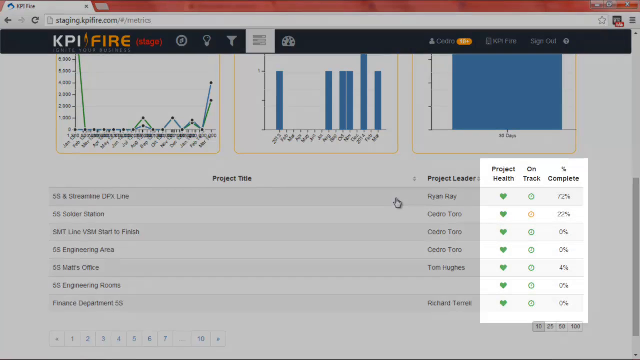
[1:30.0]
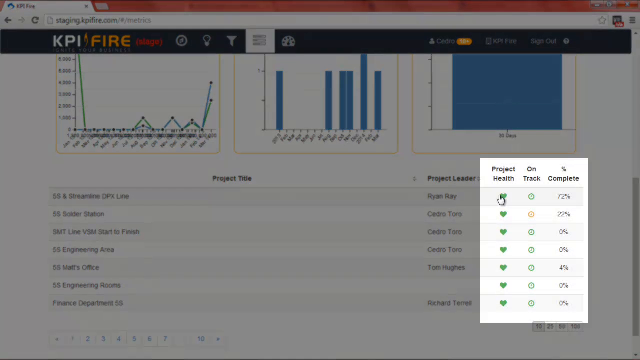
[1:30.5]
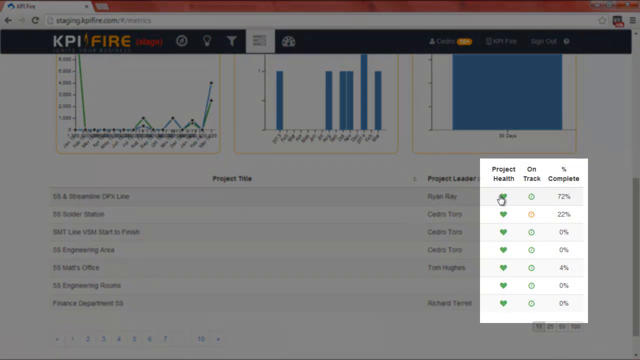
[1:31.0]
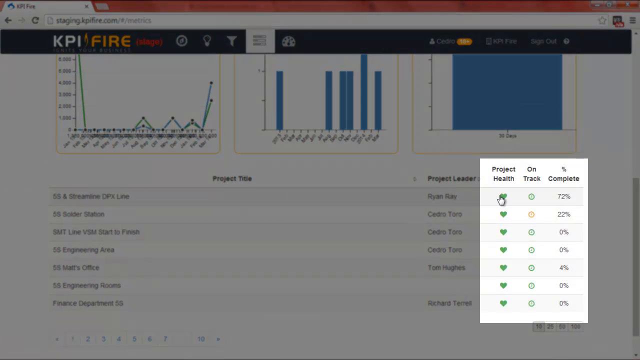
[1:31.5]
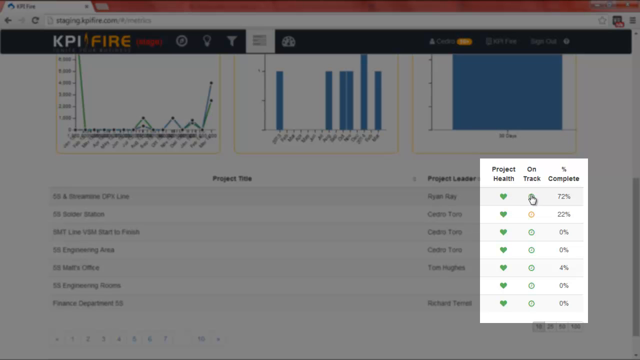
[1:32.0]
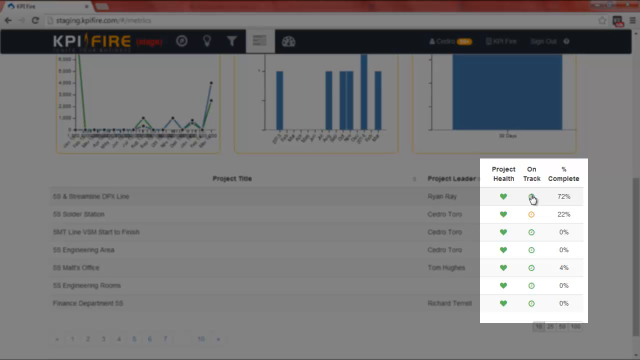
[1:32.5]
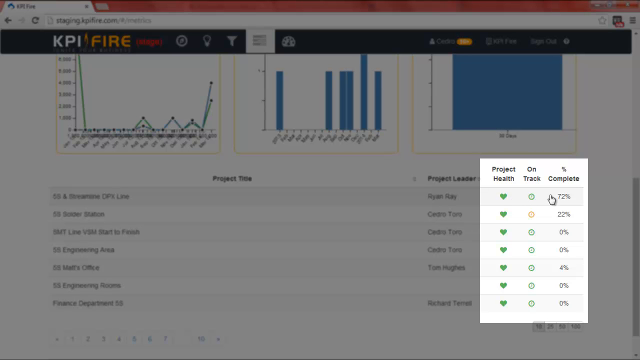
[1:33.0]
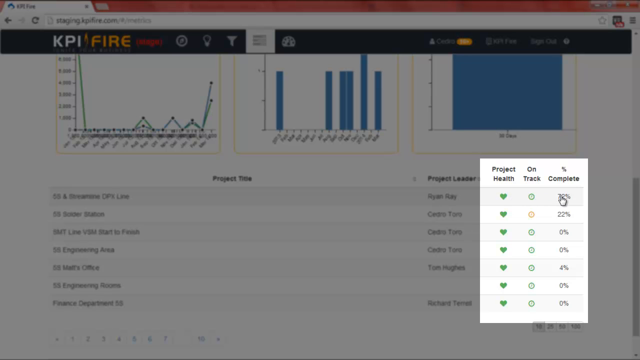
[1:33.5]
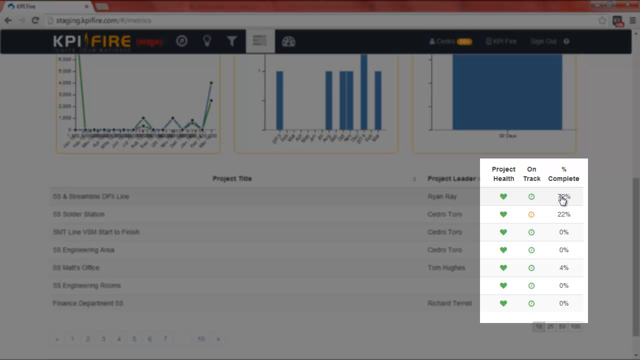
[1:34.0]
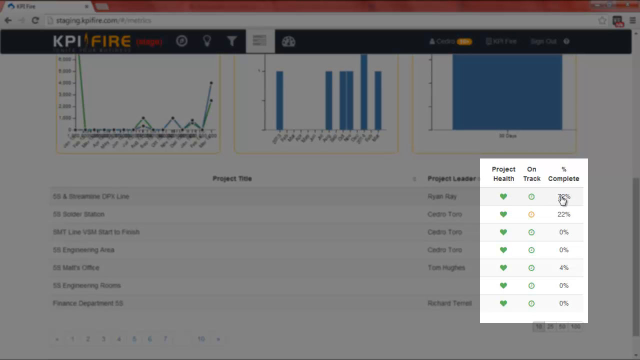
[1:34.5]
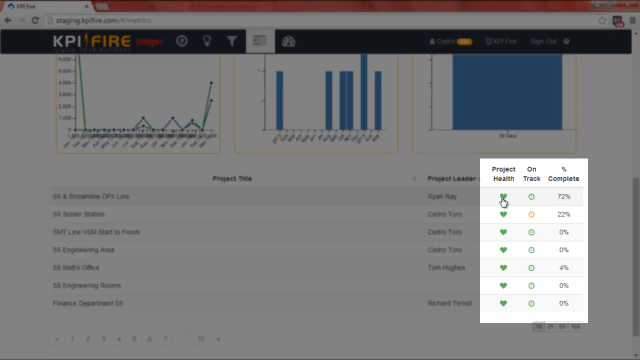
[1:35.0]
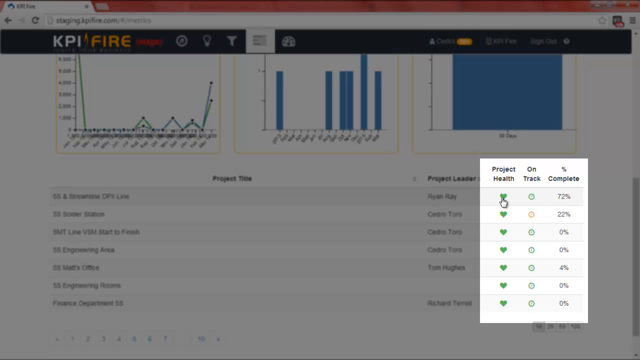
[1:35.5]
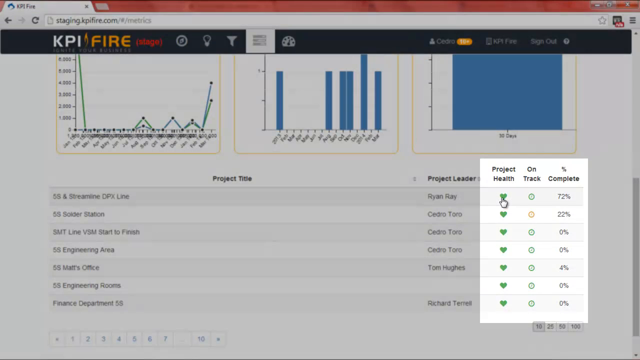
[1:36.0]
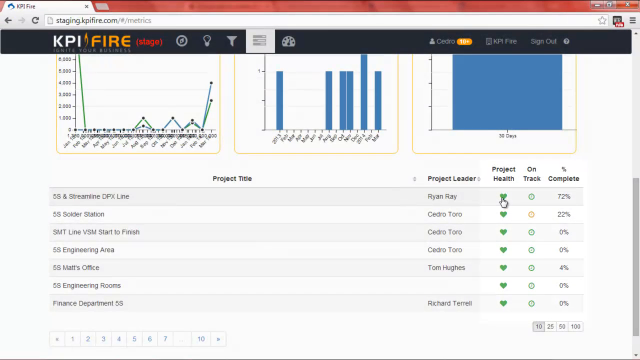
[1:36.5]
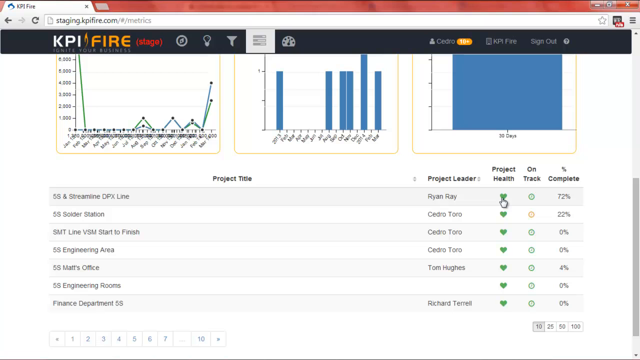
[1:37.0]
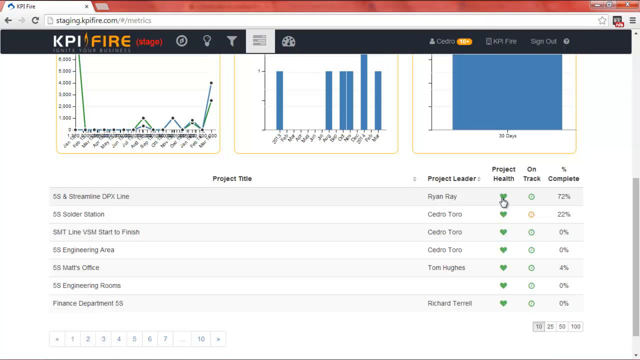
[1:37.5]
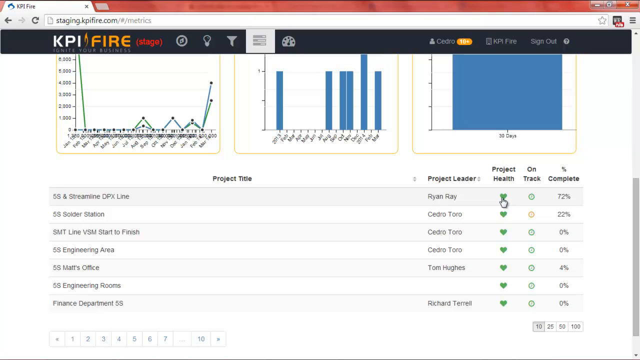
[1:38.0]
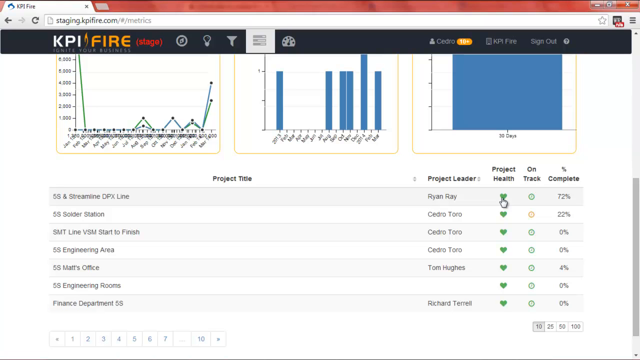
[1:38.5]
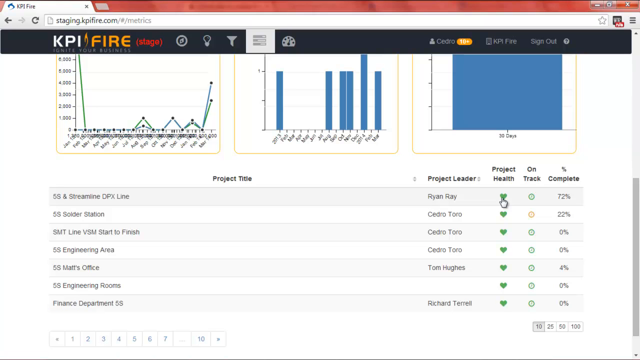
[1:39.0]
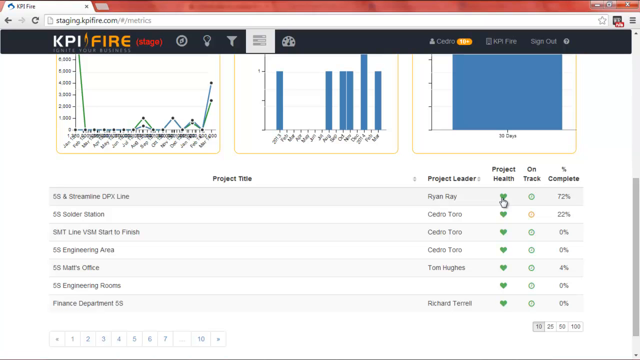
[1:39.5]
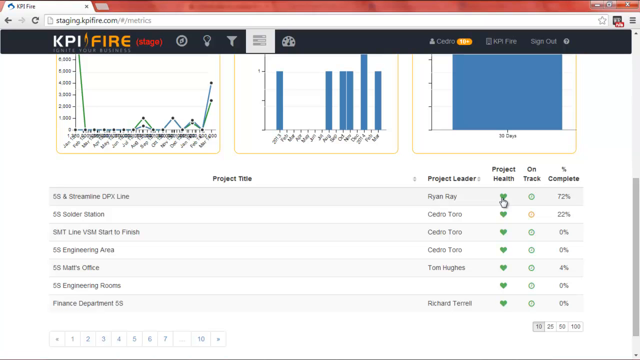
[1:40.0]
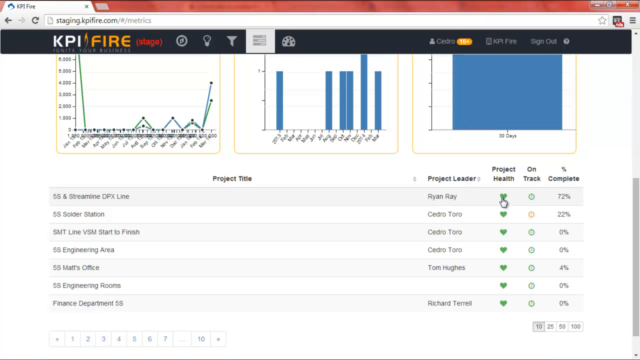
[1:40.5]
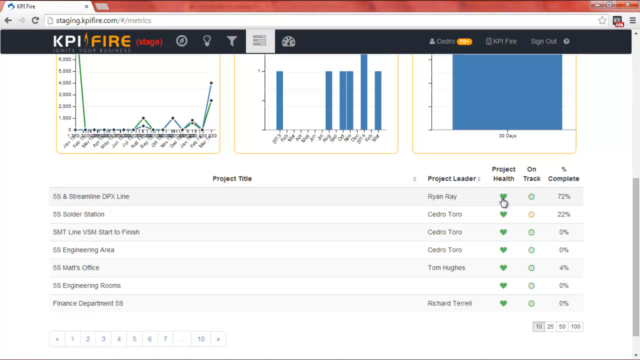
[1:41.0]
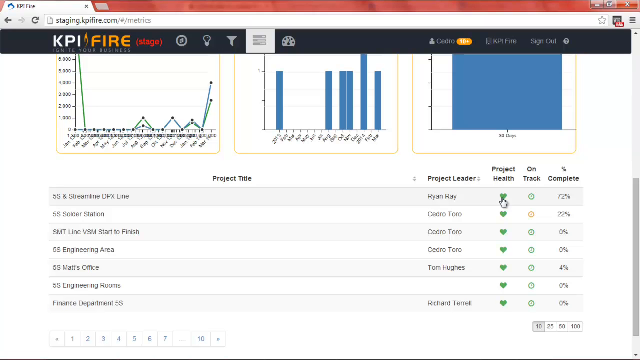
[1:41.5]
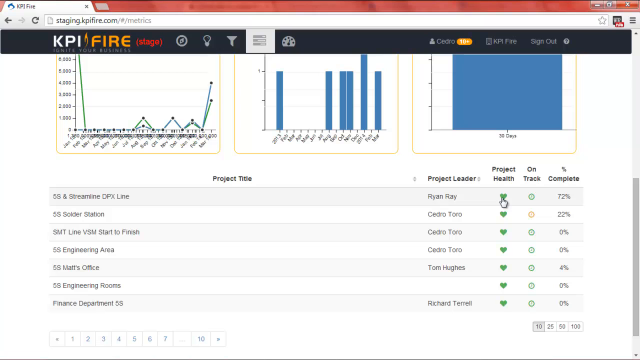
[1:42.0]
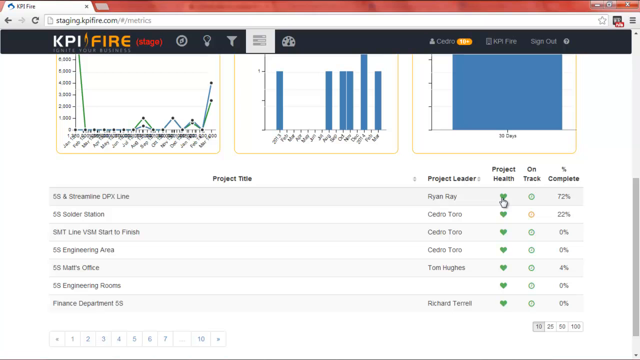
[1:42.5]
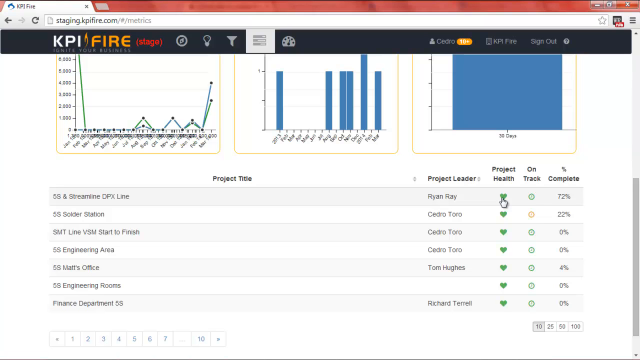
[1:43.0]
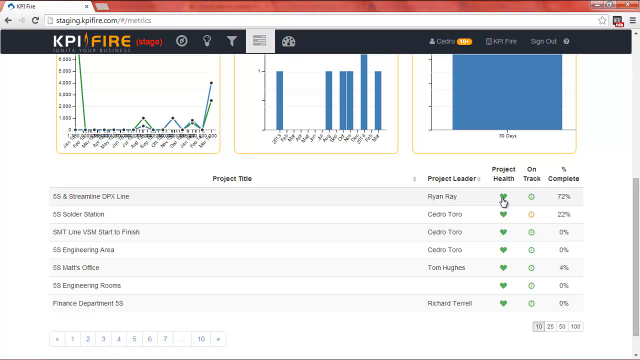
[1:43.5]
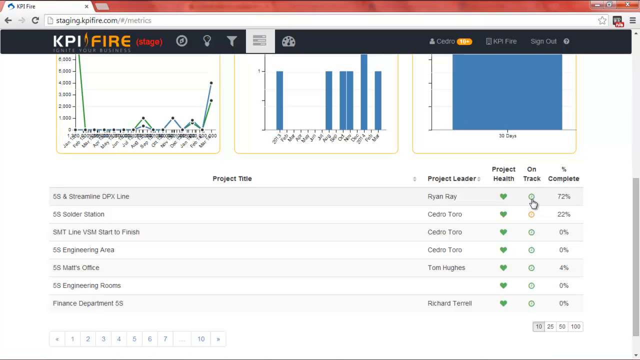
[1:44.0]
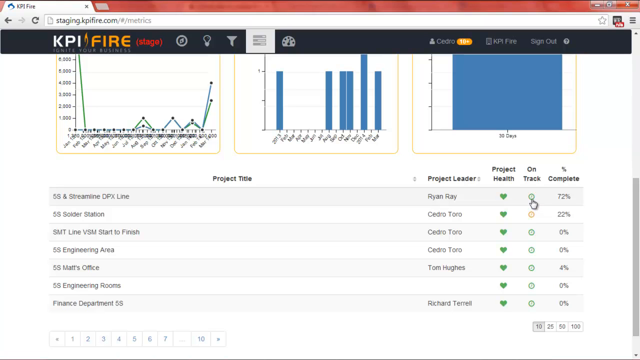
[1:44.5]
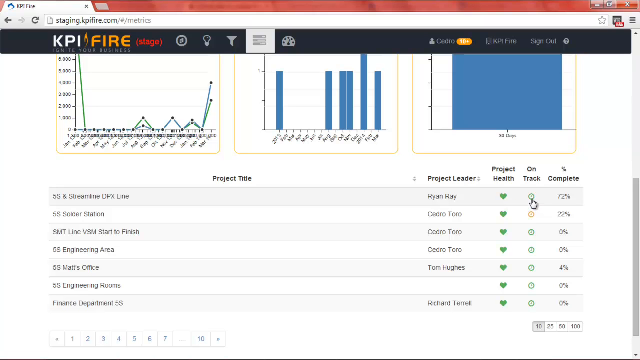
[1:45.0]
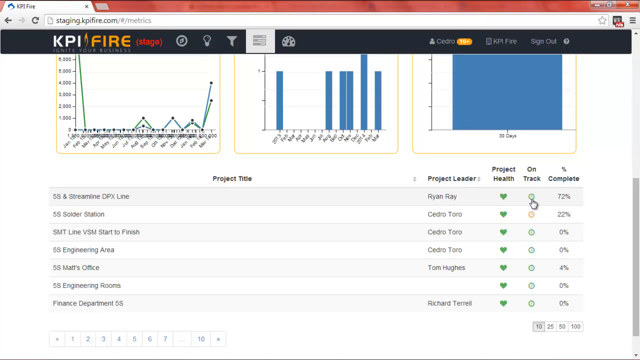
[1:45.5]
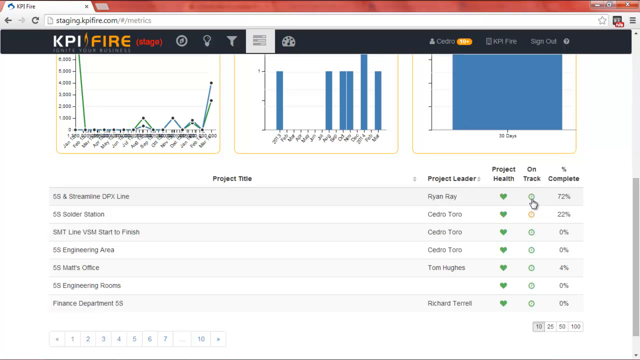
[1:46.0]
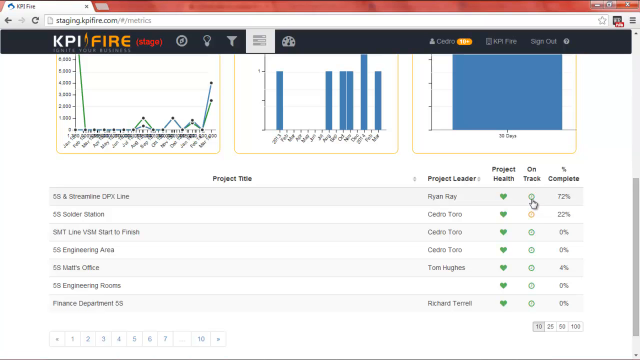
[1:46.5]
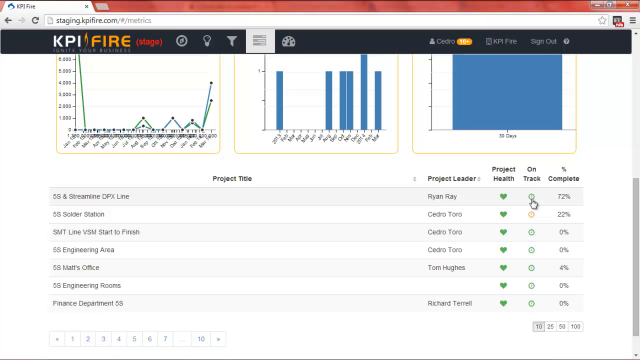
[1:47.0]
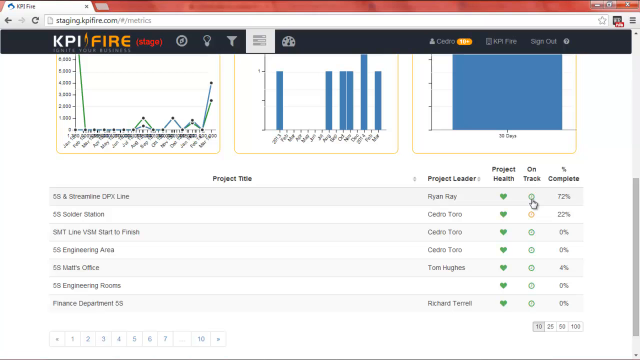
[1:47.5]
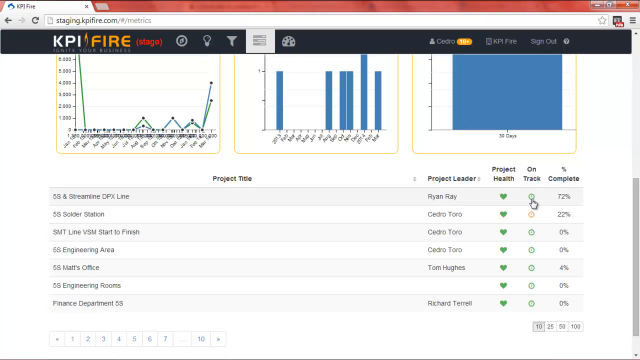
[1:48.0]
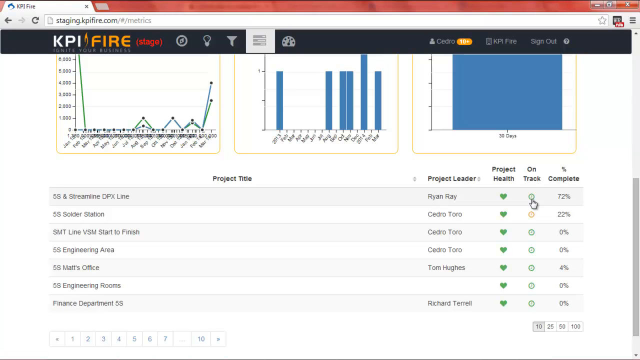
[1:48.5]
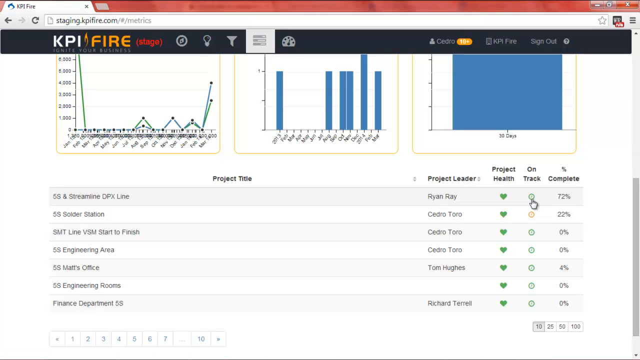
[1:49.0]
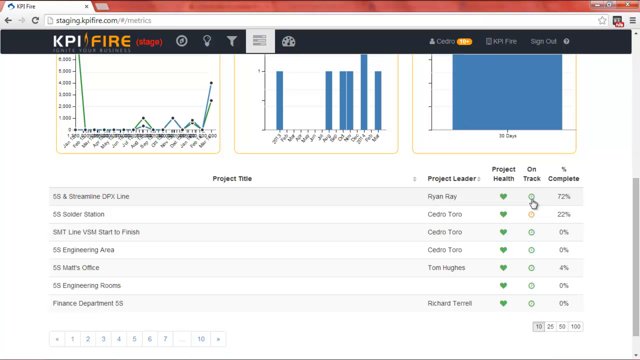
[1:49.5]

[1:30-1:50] The screen fades to a low-opacity black over the whole web page, except for a square that remains clearly colored over the Project Health, On Track, and Percentage Complete sections. The mouse hovers over the sections from Project Health to On Track to Percent Complete, then moves back to Project Health and stays on a green heart symbolizing the project's good health. It then moves to the On Track symbol, a simple clock symbol that is green, indicating the project is on track. Each project has a differently colored symbol for its health or progress, ranging from green to yellow to red. The mouse then stays on the on track symbol.